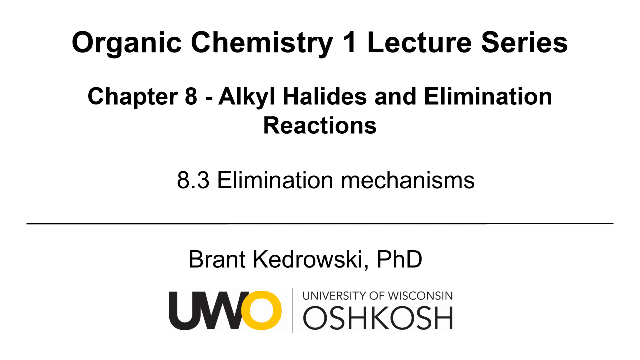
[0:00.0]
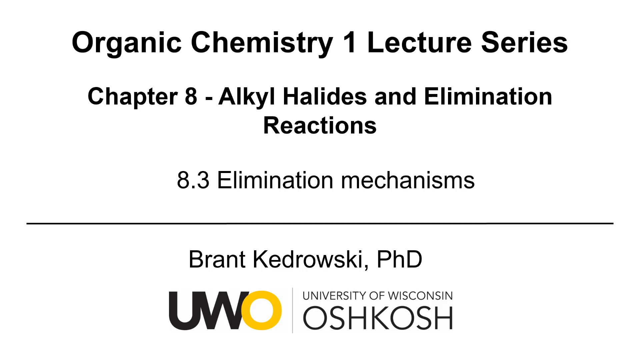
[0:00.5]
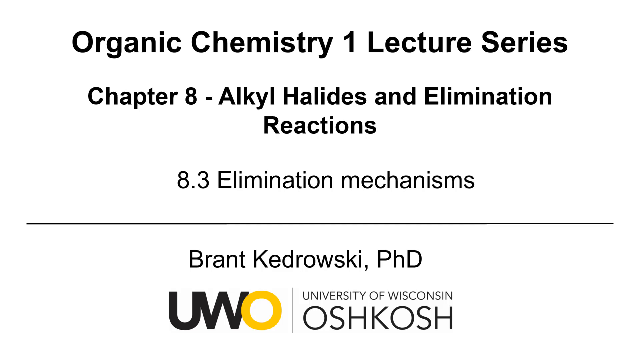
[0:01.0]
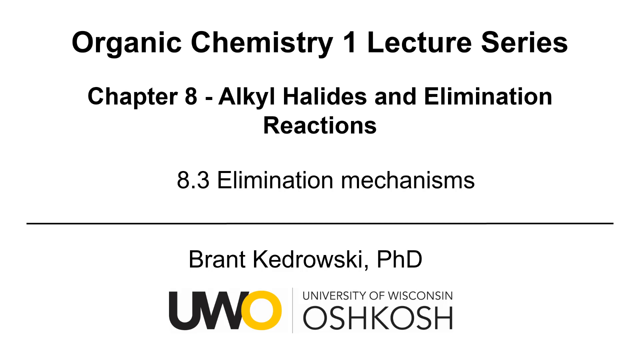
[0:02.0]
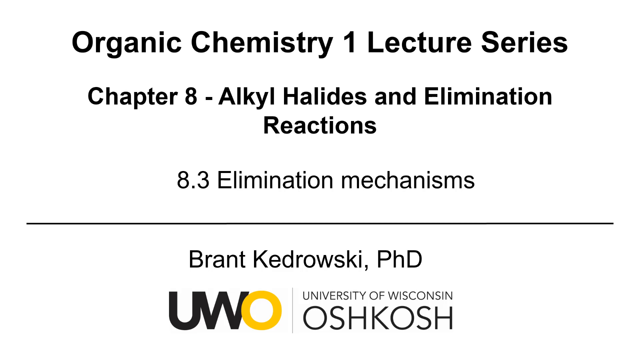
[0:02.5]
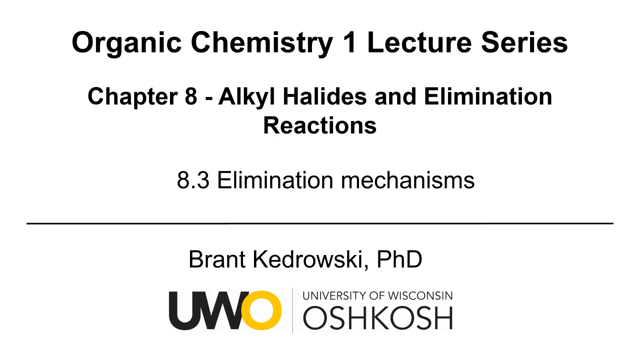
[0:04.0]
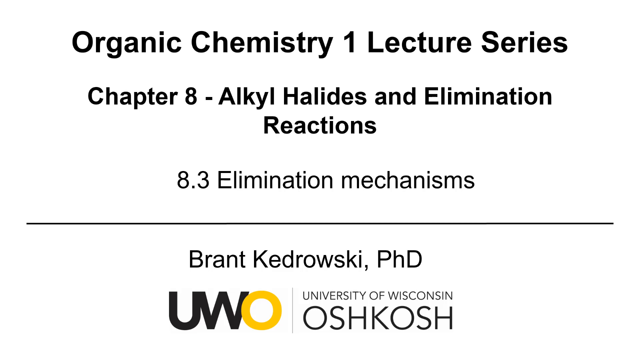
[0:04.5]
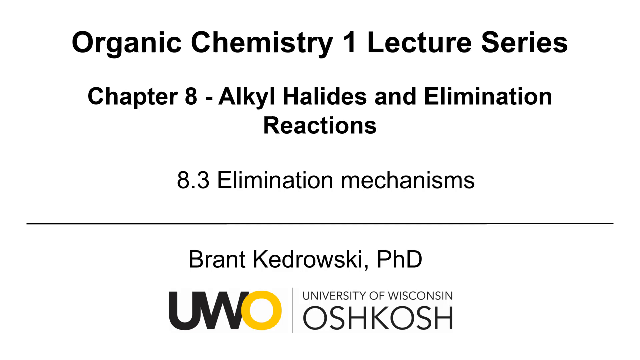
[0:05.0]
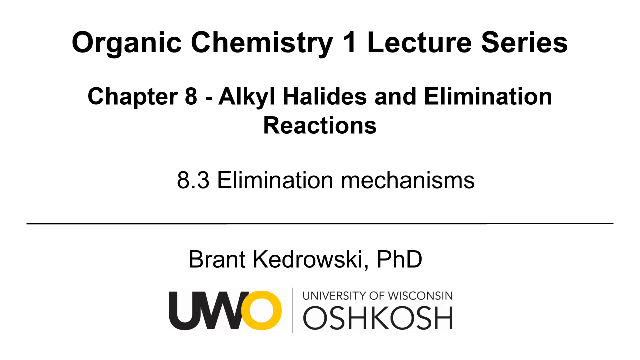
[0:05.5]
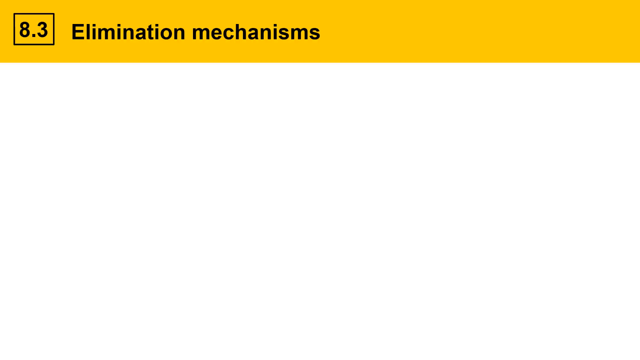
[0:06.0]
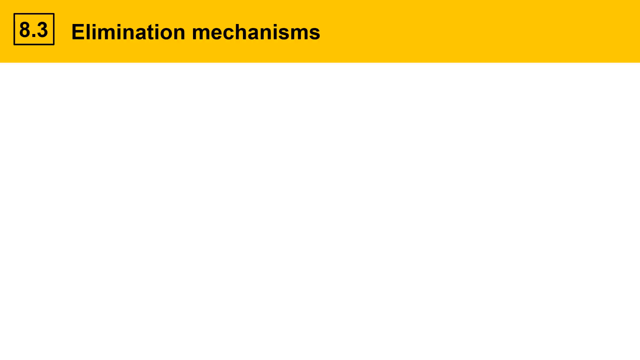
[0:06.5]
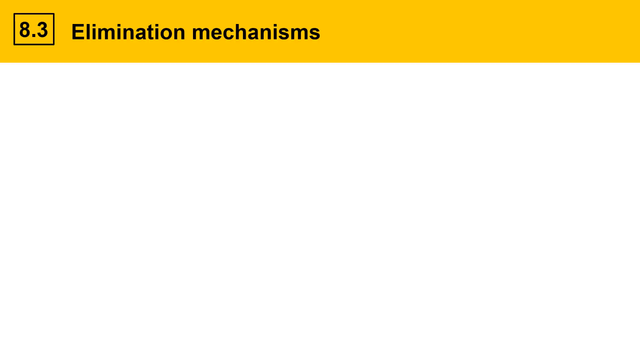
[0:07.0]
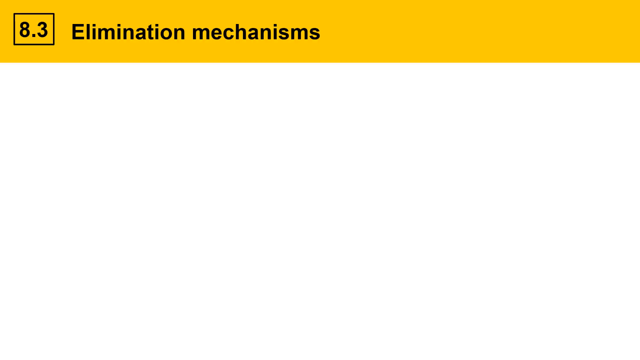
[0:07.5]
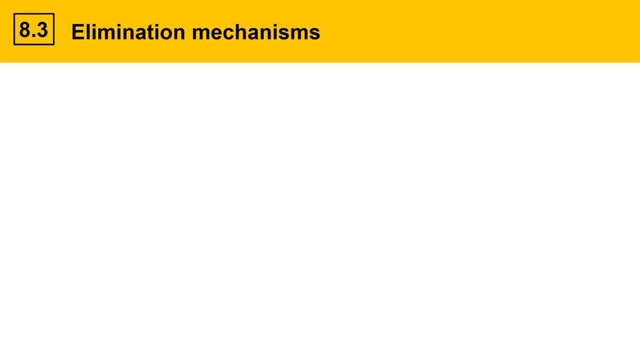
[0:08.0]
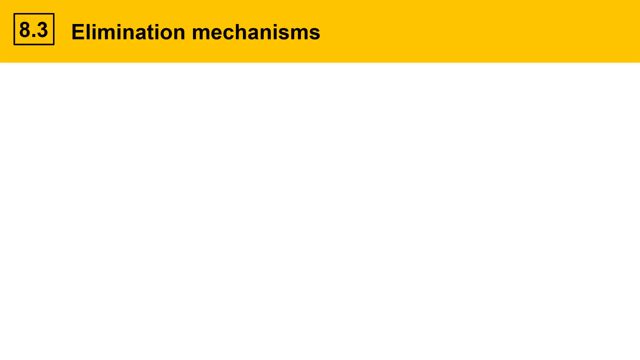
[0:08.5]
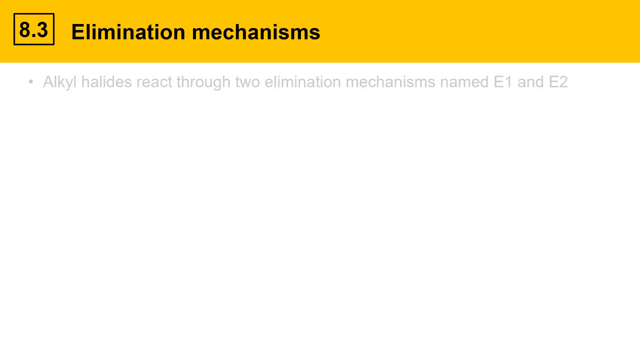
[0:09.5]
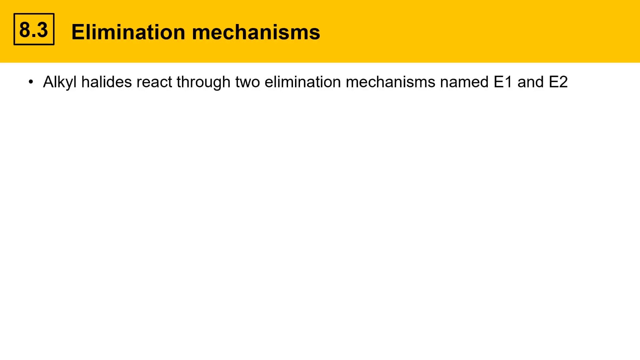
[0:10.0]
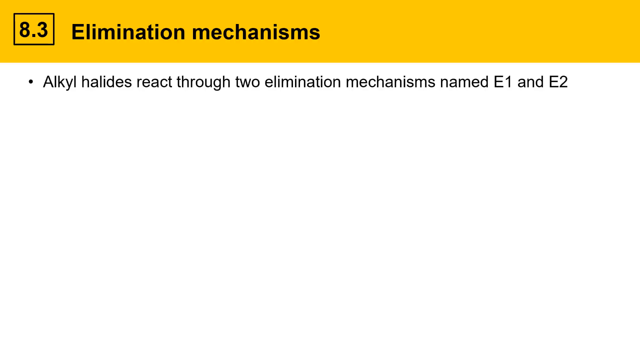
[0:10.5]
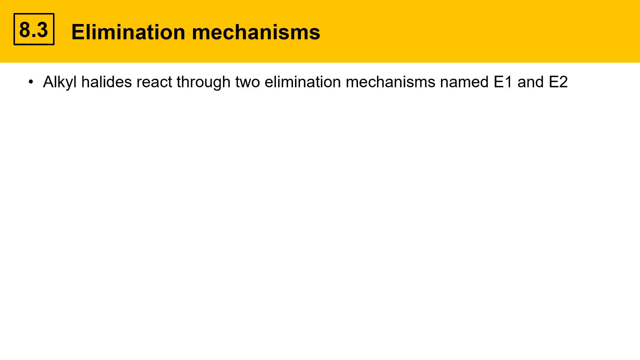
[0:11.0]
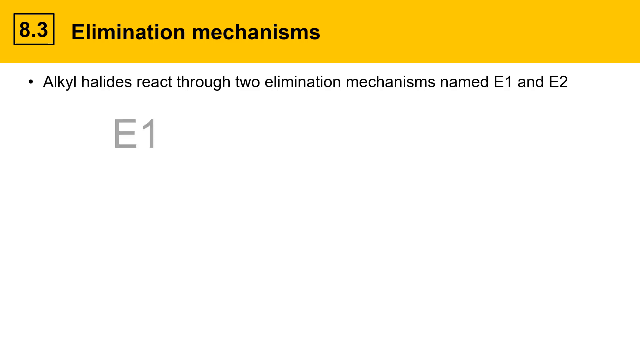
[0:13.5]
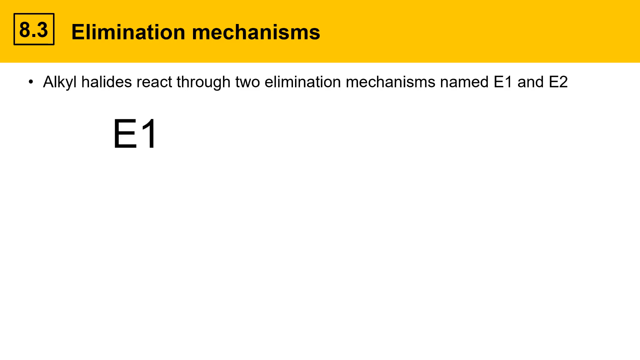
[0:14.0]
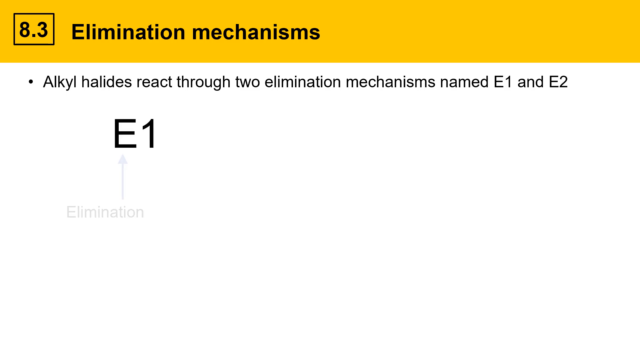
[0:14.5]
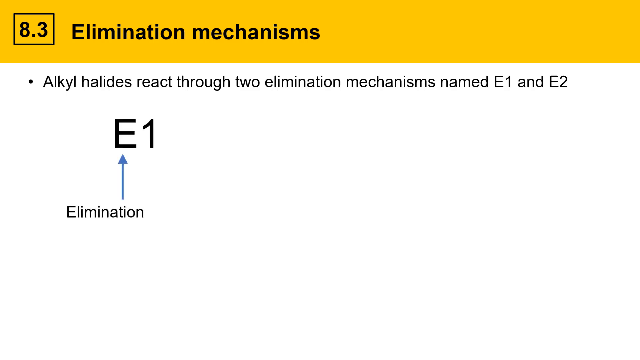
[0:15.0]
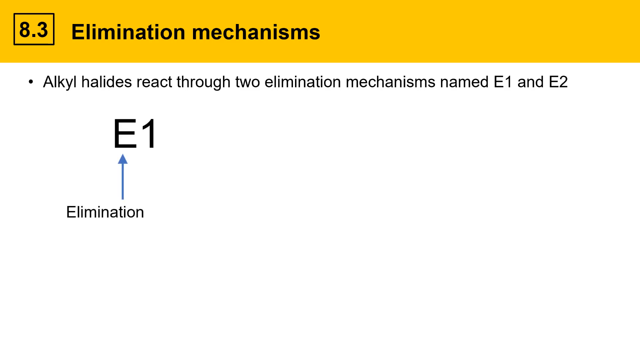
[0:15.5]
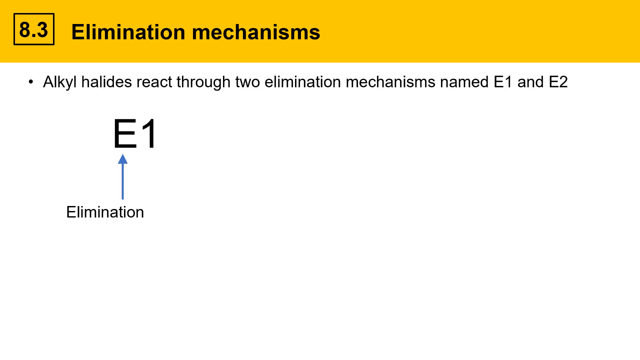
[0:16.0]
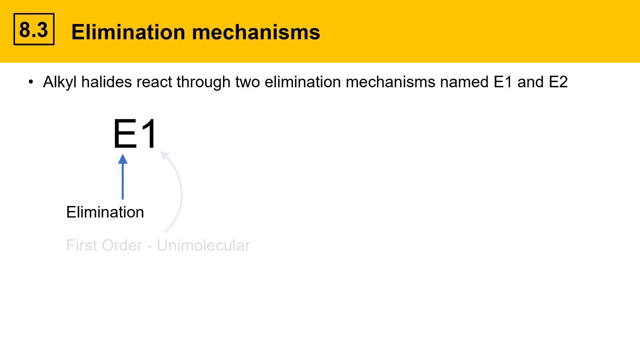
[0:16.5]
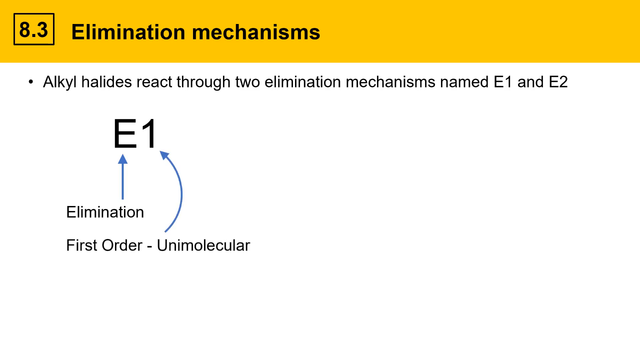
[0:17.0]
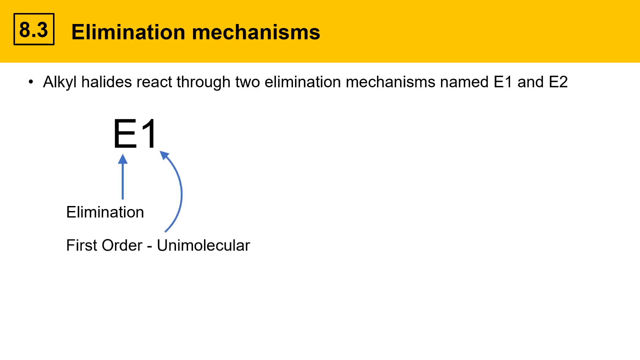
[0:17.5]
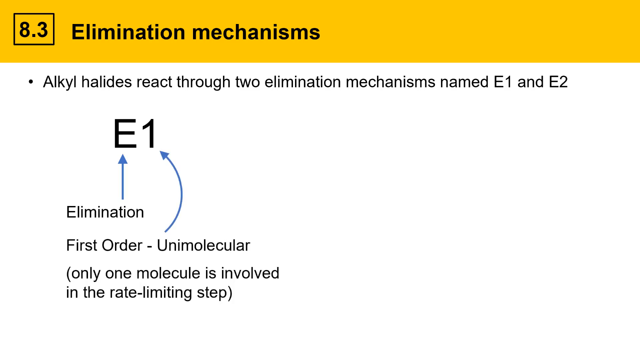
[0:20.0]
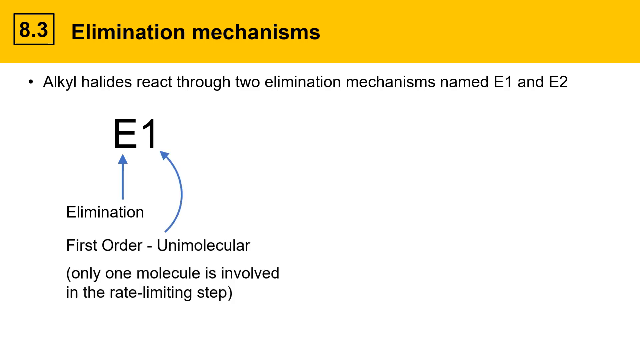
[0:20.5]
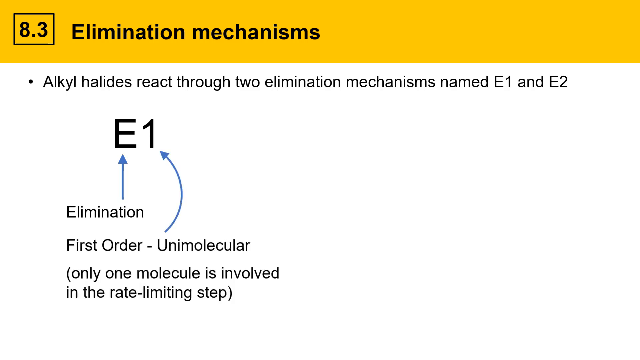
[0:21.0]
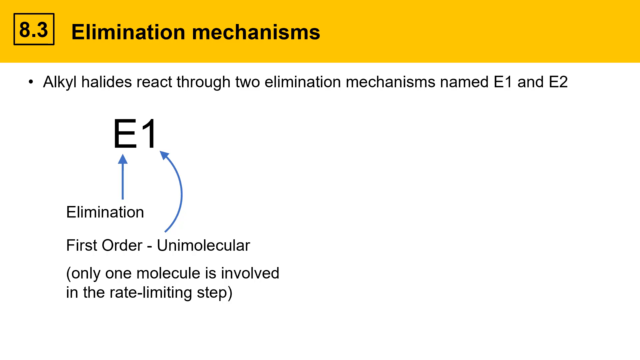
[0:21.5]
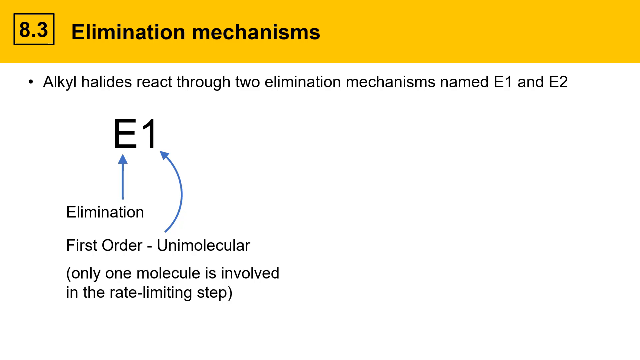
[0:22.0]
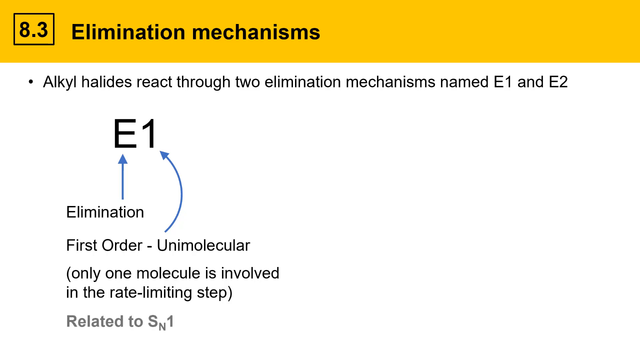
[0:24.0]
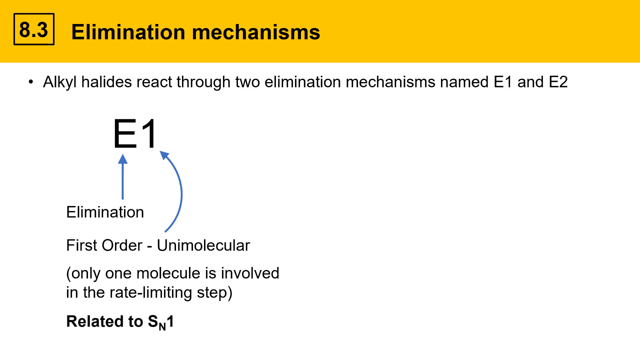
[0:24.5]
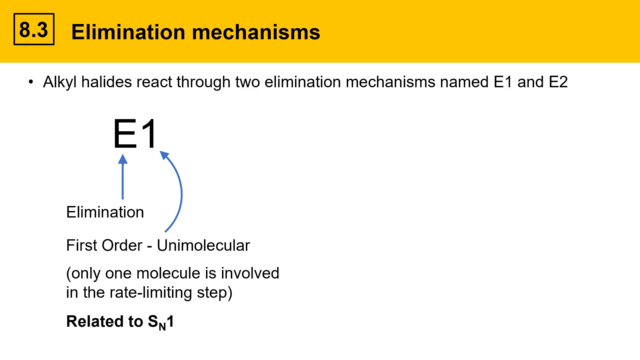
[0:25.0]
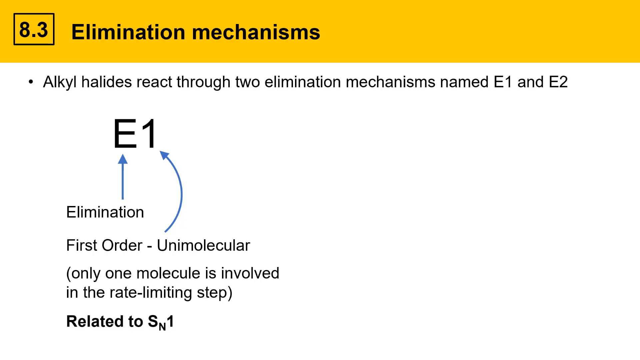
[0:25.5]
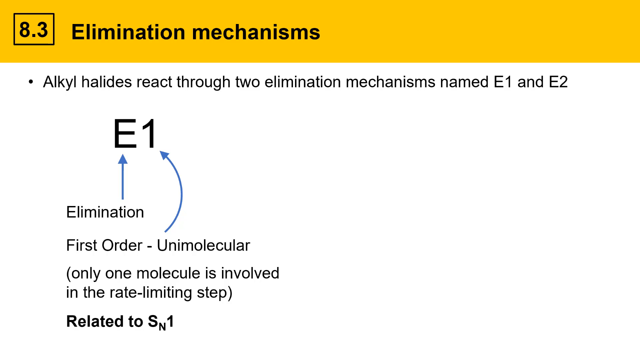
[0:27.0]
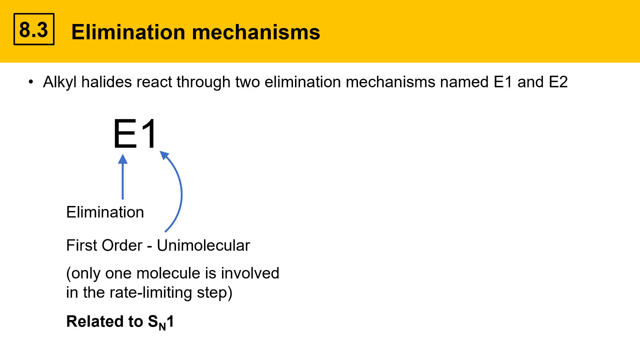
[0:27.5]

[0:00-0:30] The video opens with text on a white background reading "Organic Chemistry 1 Lecture Series Chapter 8 Alkyl Halides and Elimination Reactions 8.3 Elimination Mechanisms". Below it there appears to be text reading "Brandt Kedrowski Ph.D. UWO University of Wisconsin Oshkosh". The video then switches to a different page with "8.3 Elimination Mechanisms" highlighted in yellow, followed by the statement "Alkyl Halides reacts through two Elimination Mechanisms named E1 and E2." Below is "E1 Elimination first order unimolecular only one molecule is involved in the rate limiting step related to SN1". On the right, text reading "E2" seems to appear just as the shot ends. The video appears to consist of lecture slides for an Organic Chemistry course.